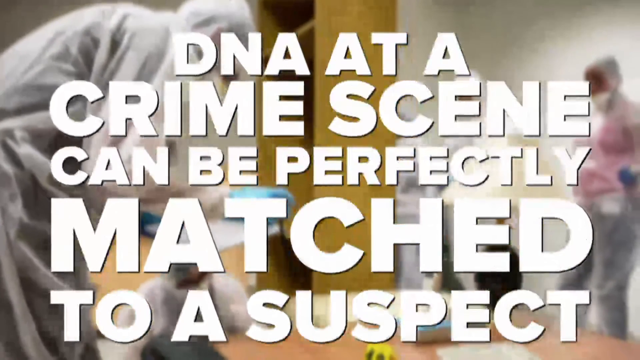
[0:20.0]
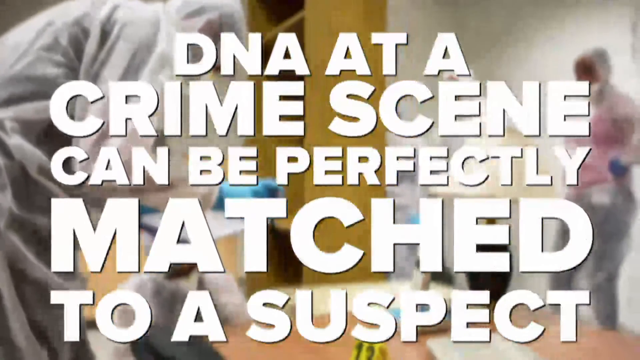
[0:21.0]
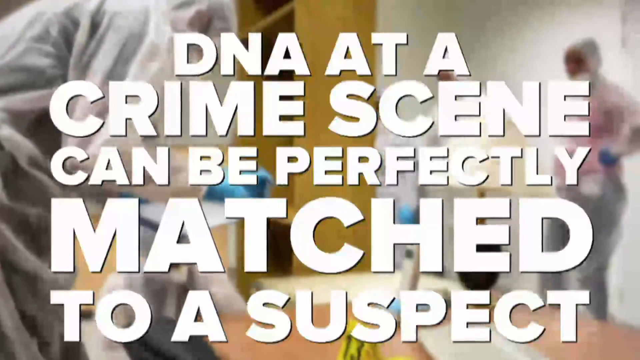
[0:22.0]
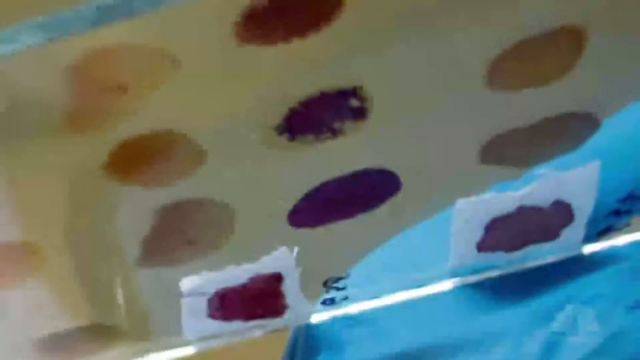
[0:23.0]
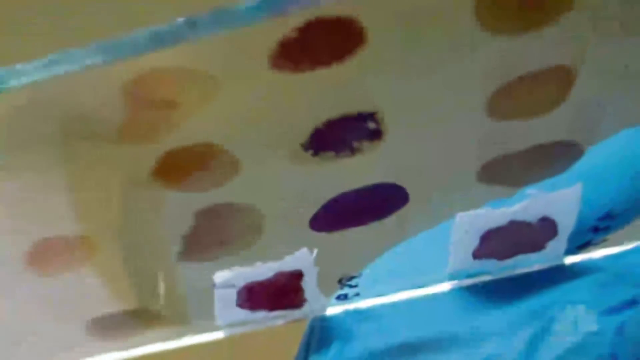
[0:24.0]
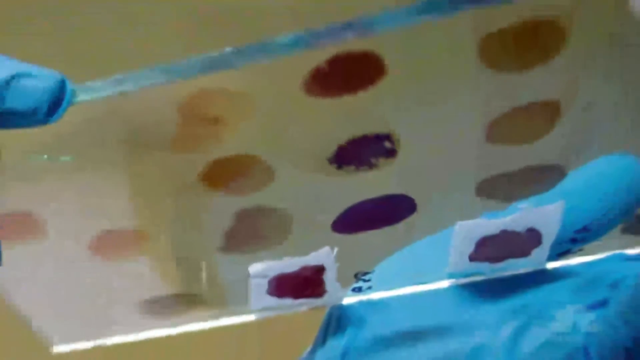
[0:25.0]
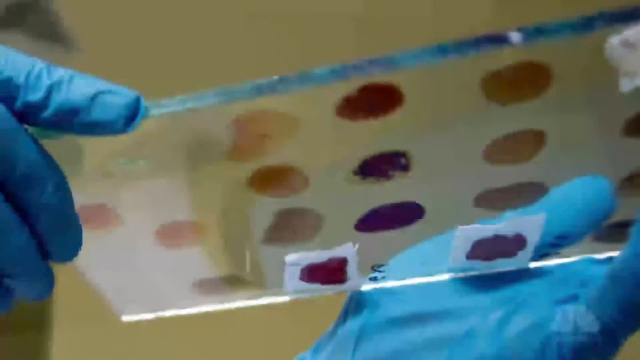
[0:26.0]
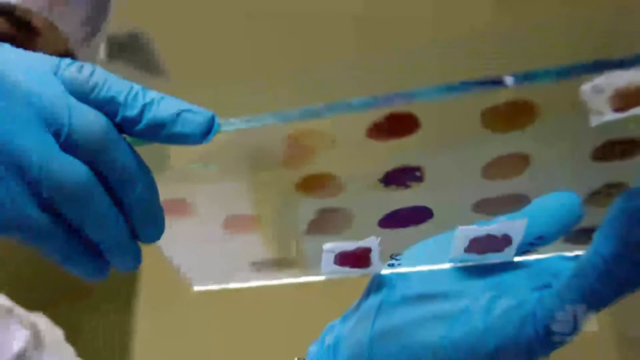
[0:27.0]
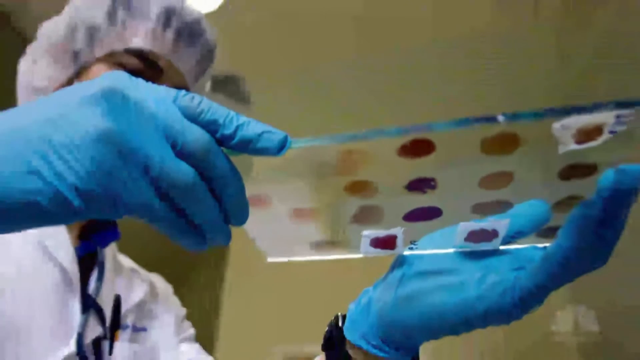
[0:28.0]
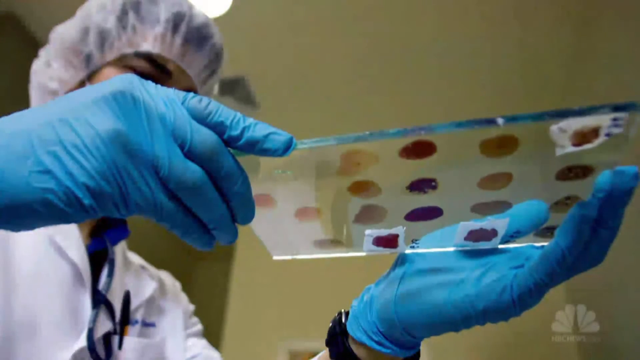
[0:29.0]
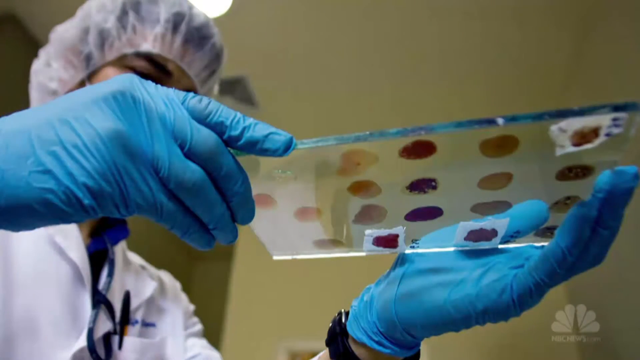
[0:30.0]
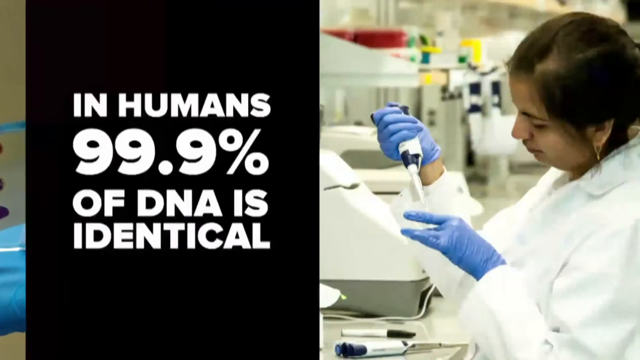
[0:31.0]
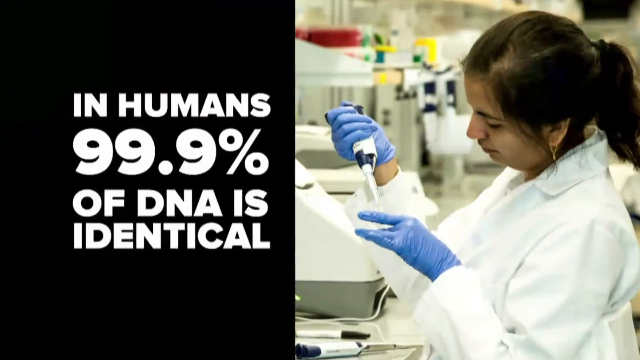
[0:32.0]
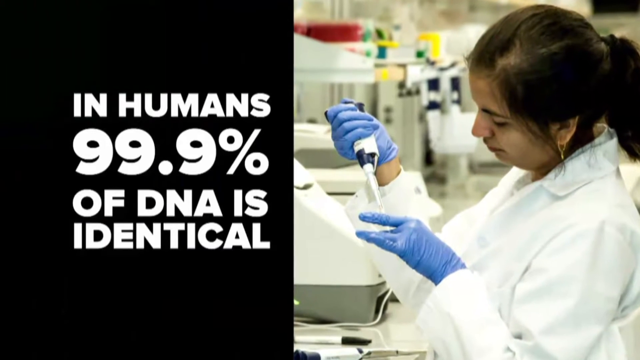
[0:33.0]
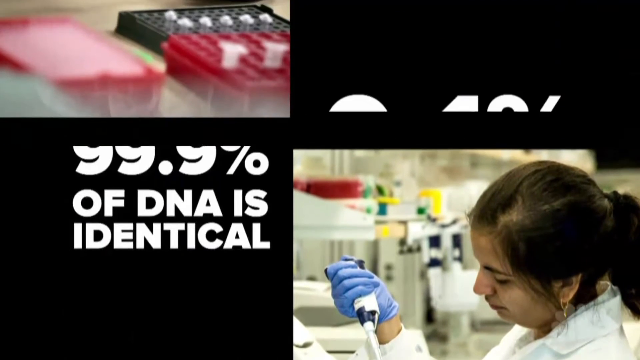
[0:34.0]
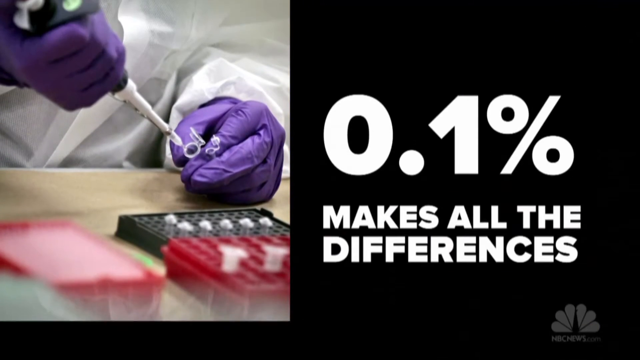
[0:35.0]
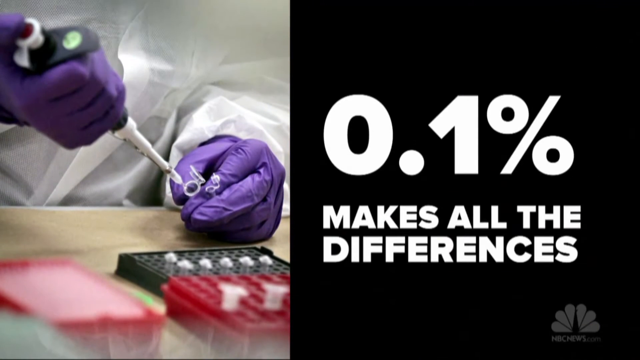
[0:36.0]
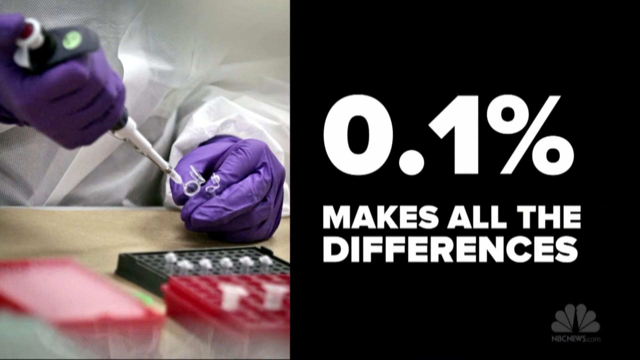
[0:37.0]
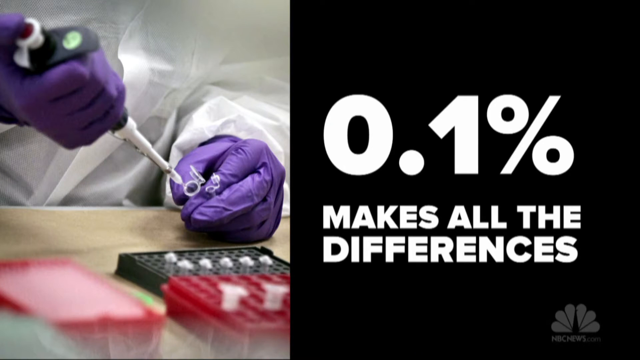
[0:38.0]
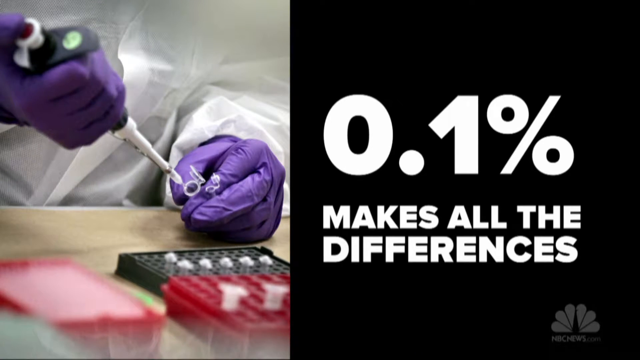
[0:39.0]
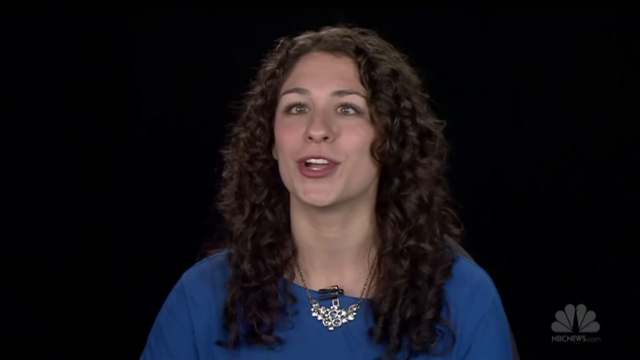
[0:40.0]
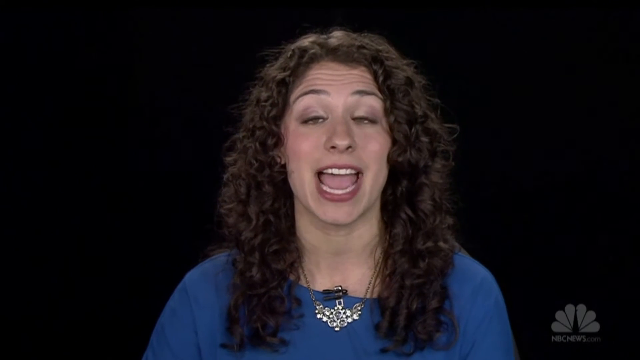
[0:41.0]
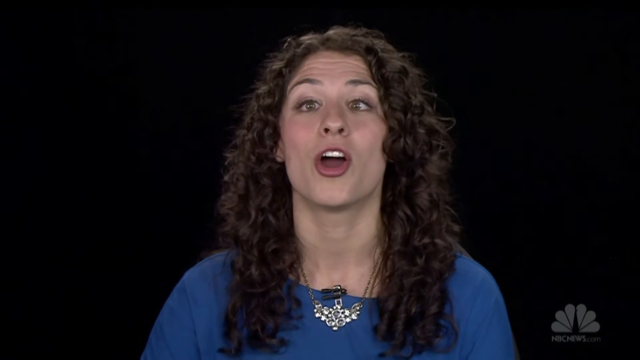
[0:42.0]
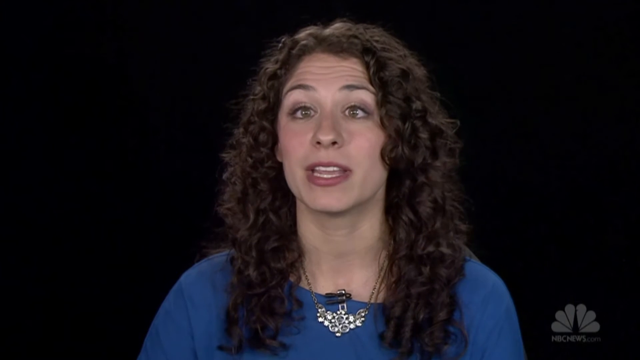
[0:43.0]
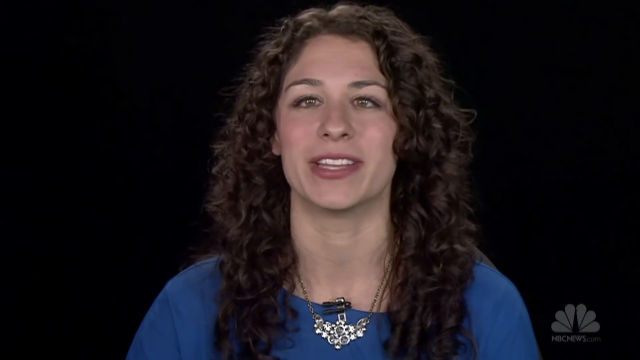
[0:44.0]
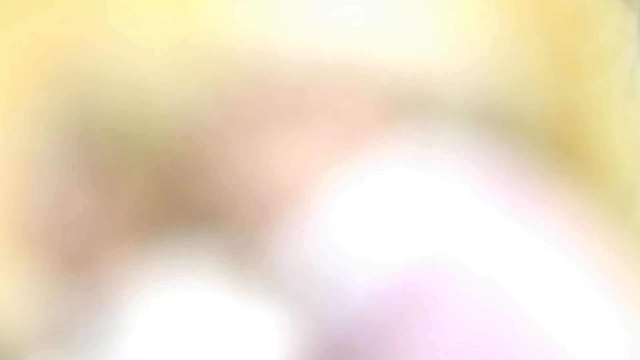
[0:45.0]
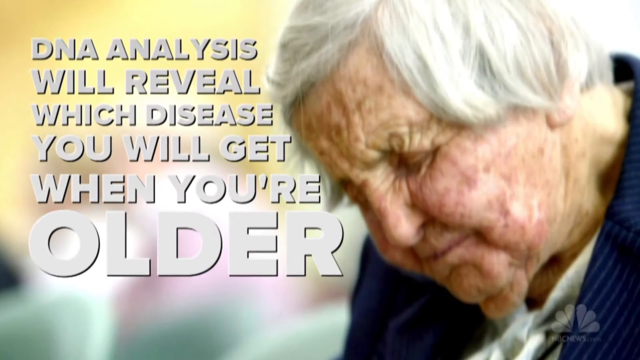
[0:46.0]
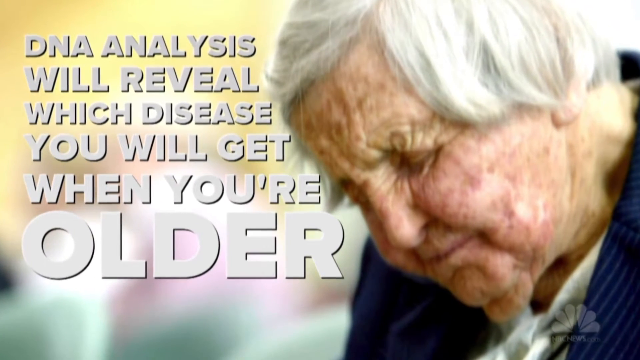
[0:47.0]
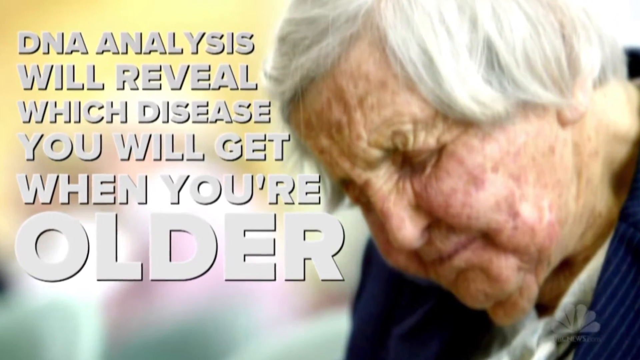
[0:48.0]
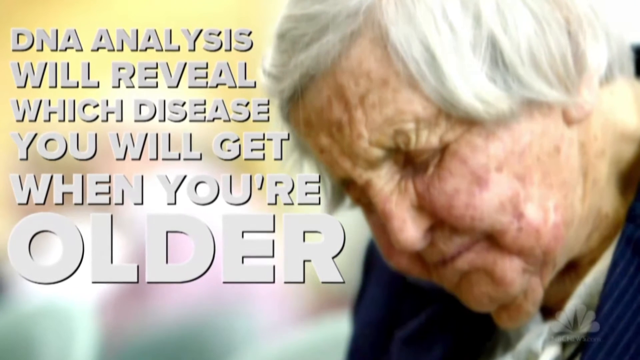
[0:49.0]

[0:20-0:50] Across the screen it says "DNA at a crime scene can be perfectly matched to a suspect". In the background are people wearing white jumpsuits covering them from head to feet, and blue rubber gloves. The video cuts to a person wearing a white hairnet, a white lab coat and blue rubber gloves, holding a piece of glass with different colored spots on it, arranged in five rows of four; the person is looking at the glass. It then cuts to a screen split in half: the left side is black and across it says "in humans 99.9% of DNA is identical", and the right half shows a woman in a white lab coat and blue rubber gloves squeezing a tube of something into another tube. She has long black hair in a ponytail. Another split screen follows. On the left is someone in a white lab coat, seen only from the chest down, wearing purple rubber gloves, squeezing something with his right hand into a tube in his left hand. The right side of the screen is black, and across it says "0.1% makes all the differences".